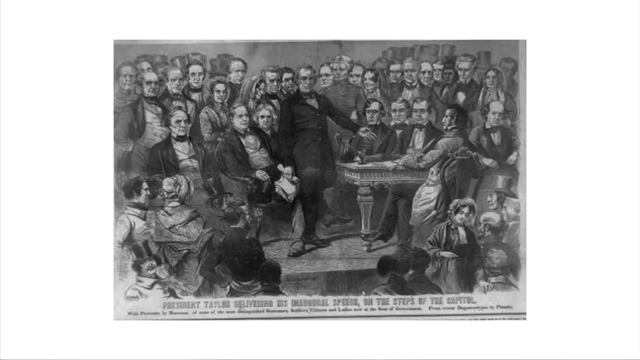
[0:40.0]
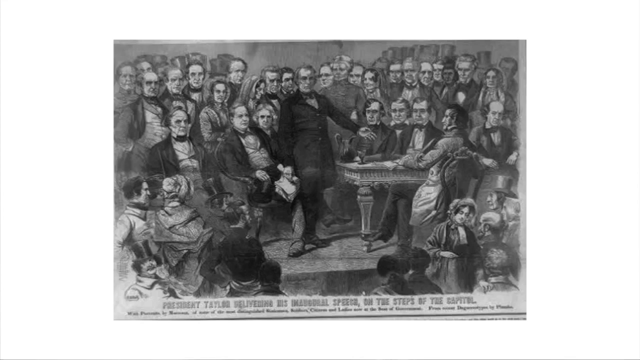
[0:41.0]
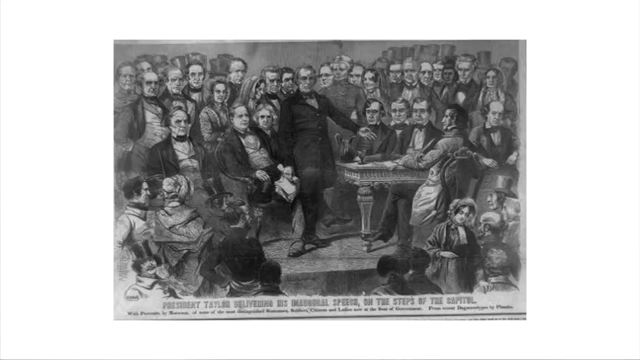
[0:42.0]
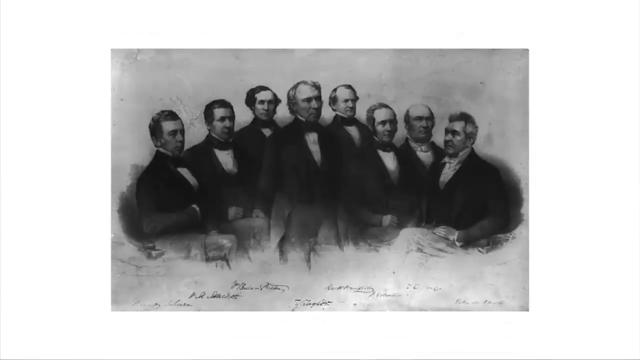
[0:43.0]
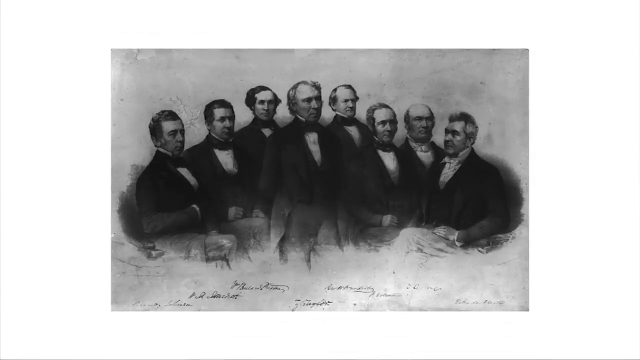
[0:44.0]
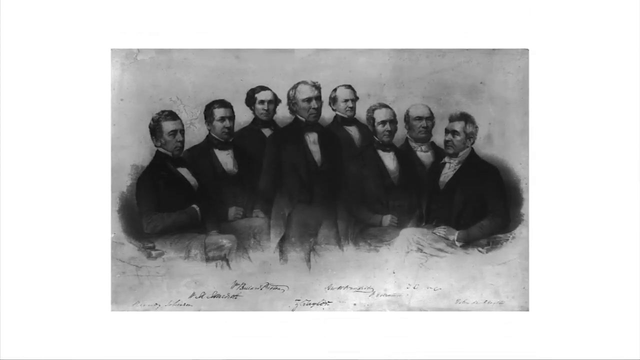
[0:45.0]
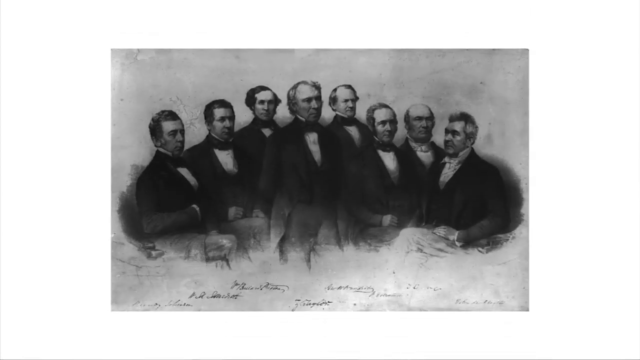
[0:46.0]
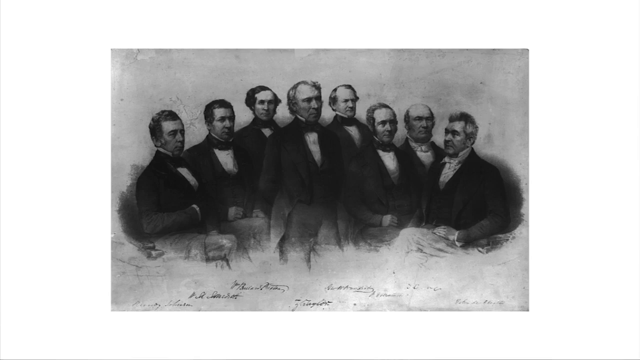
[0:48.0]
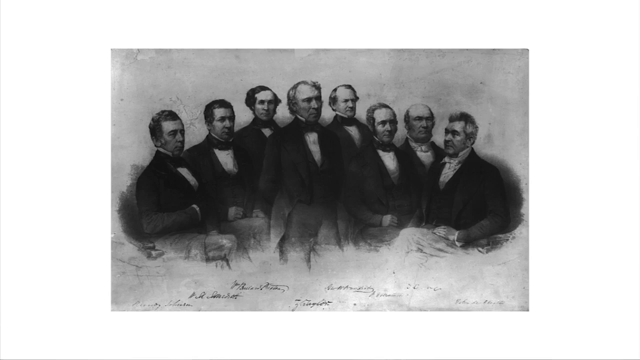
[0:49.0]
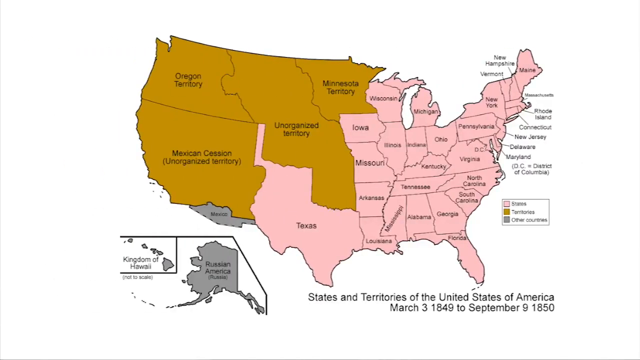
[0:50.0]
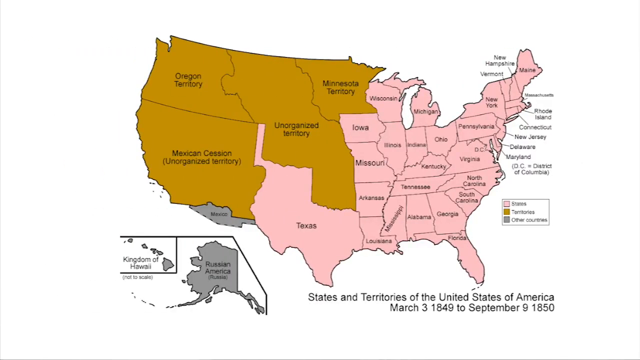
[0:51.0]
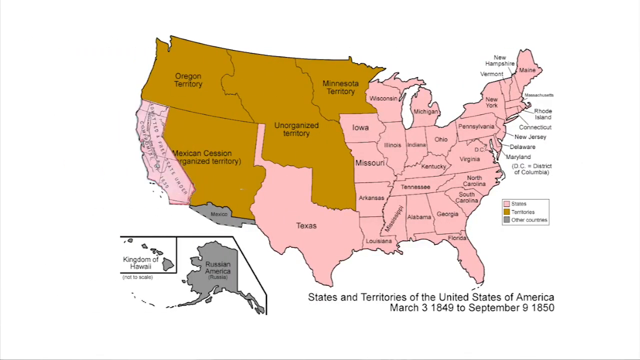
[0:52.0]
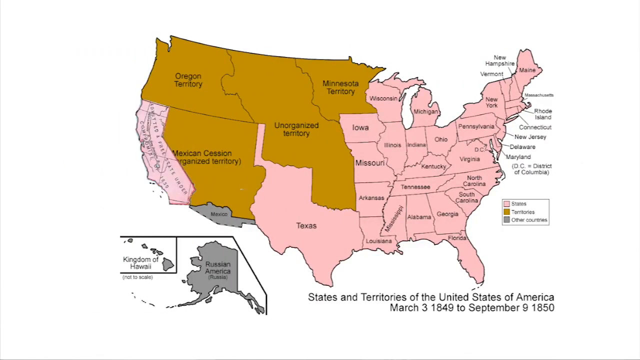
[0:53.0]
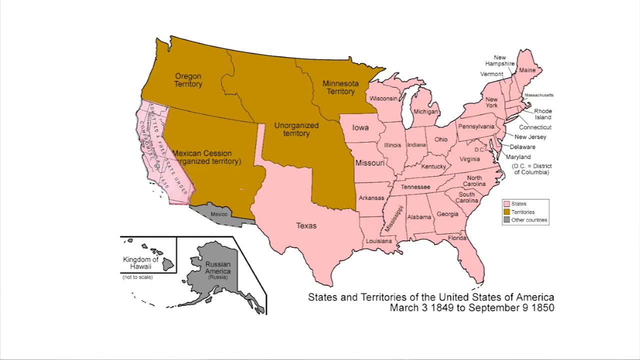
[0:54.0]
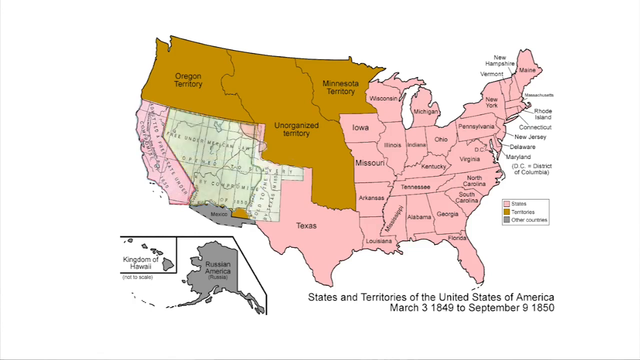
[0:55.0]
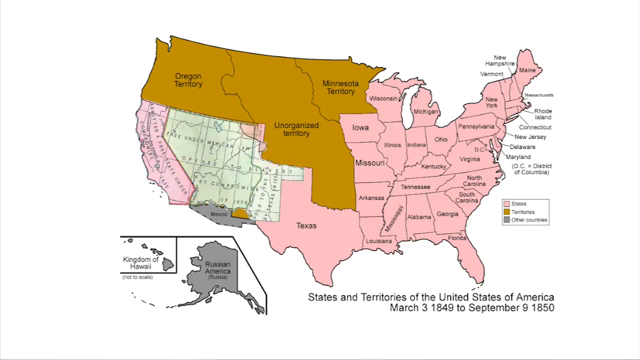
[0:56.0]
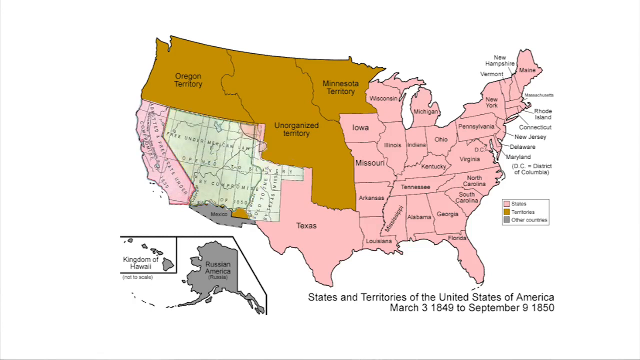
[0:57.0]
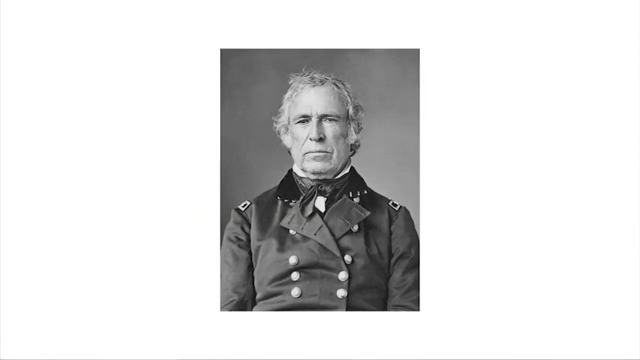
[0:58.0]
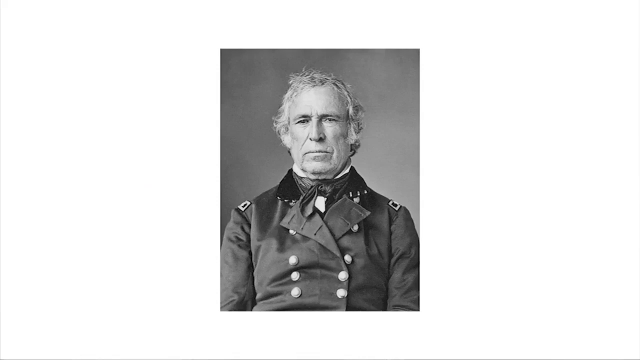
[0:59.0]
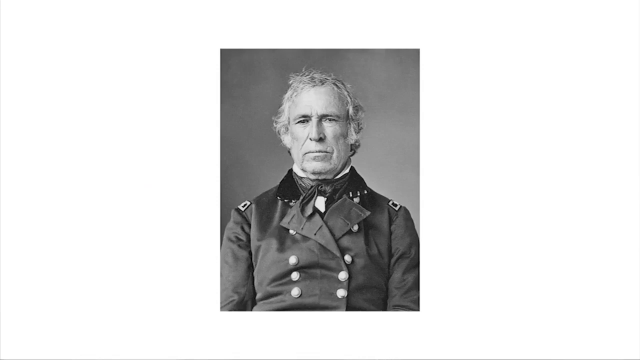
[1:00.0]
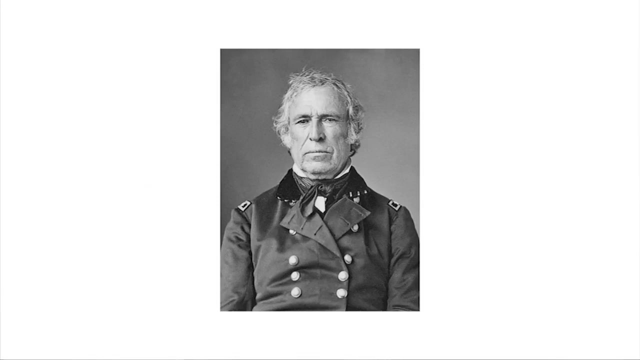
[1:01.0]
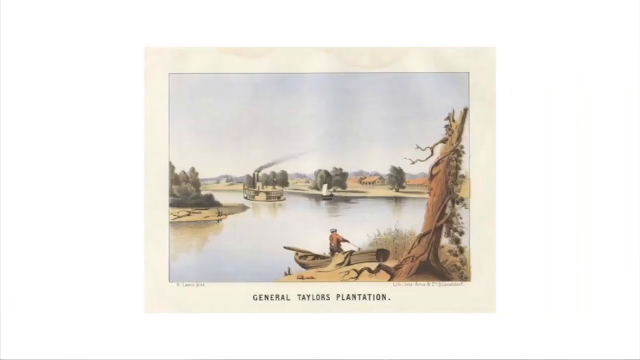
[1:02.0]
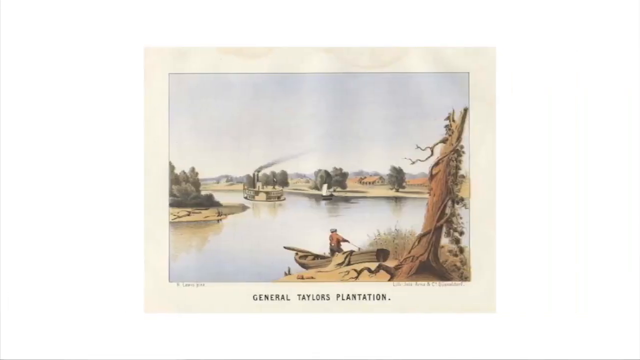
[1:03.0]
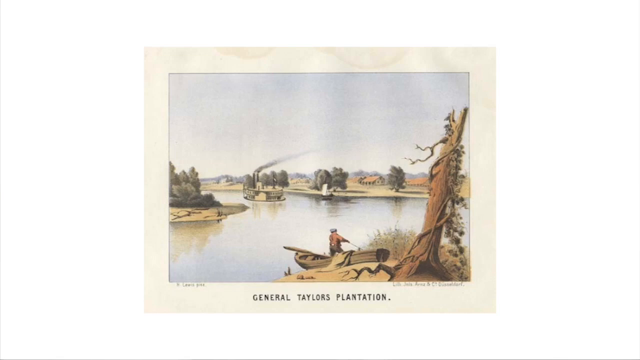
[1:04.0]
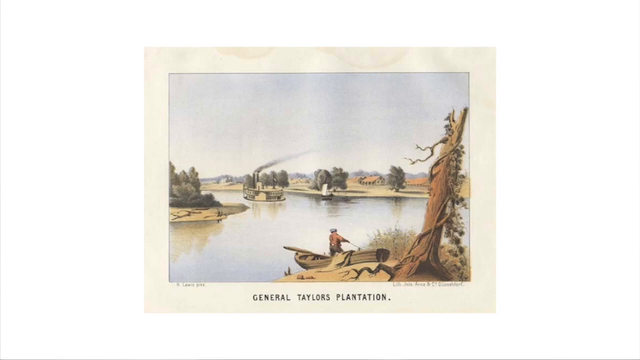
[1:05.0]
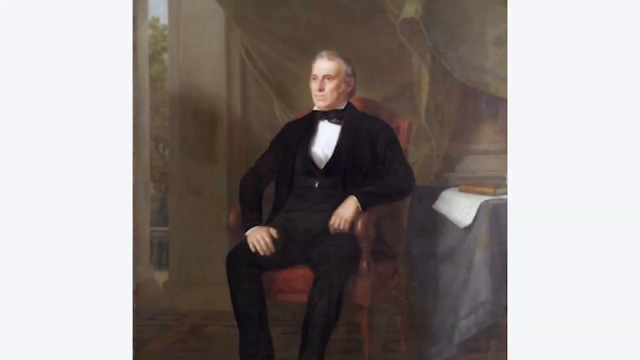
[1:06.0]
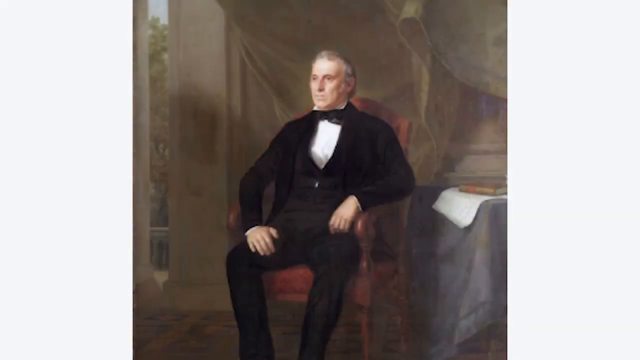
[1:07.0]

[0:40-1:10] A black-and-white image appears that looks like a drawing, possibly a pencil sketch, and also seems to be cut out of a newspaper. It shows a whole bunch of men in suits who look dressed like men from the 1800s. In the middle is a desk, where a man seems to be sitting while everybody else surrounds him. The video cuts to another picture of men also wearing suits with dark ties: about three on the left, one in the middle and four on the right, all kind of posing turned to the right, except the person on the far right, who seems to face the other direction. It then cuts to a map of the United States with the left side in brown and the right side in pink; Texas is in pink, and then California turns pink. Underneath California a last bit of gray is visible.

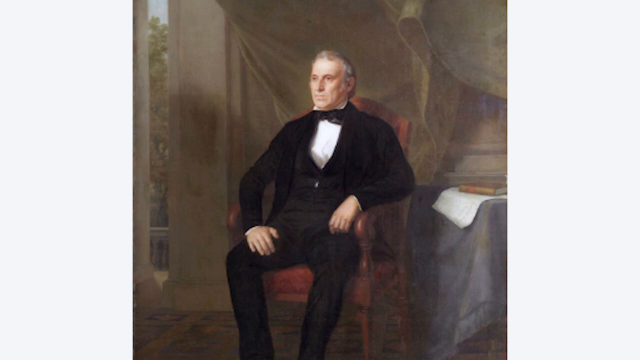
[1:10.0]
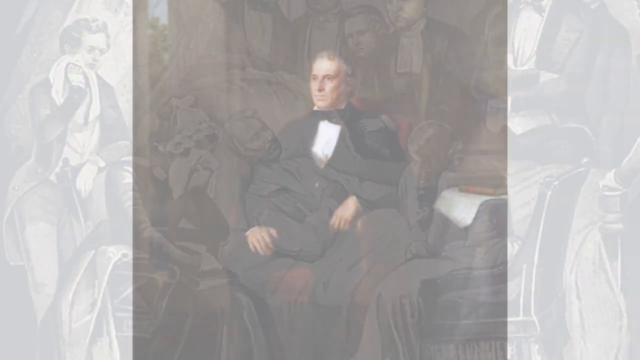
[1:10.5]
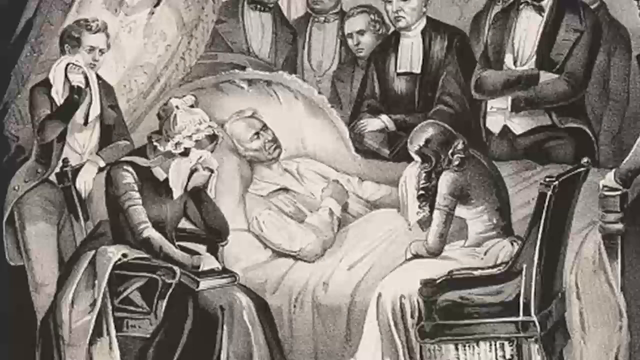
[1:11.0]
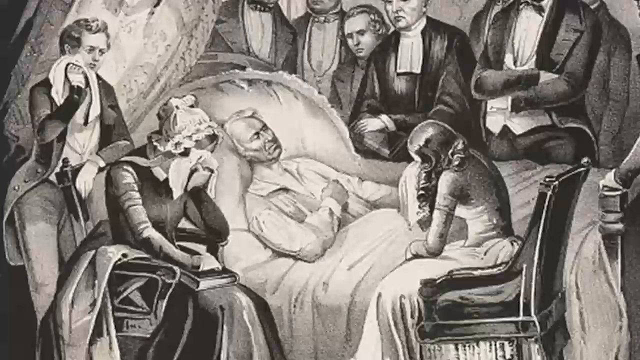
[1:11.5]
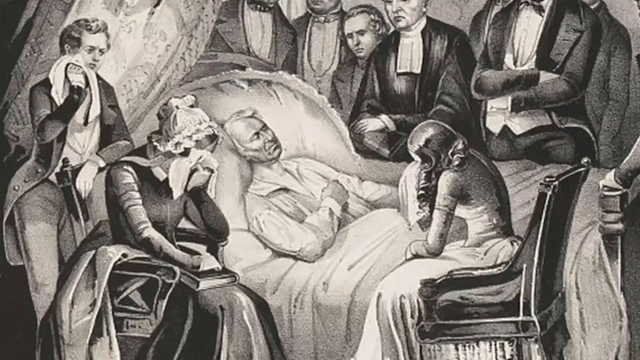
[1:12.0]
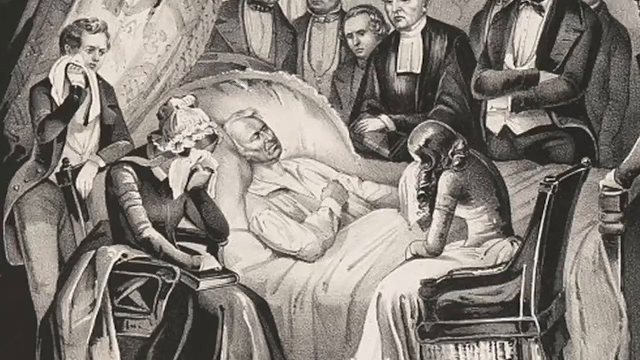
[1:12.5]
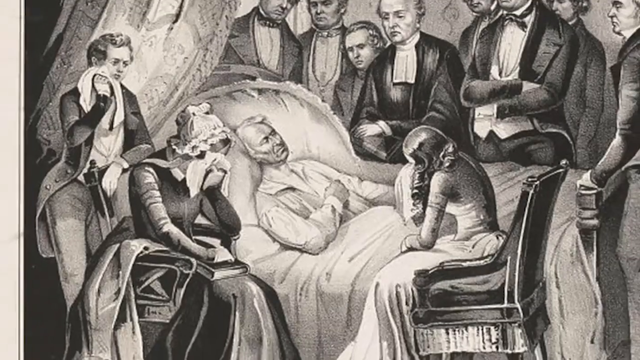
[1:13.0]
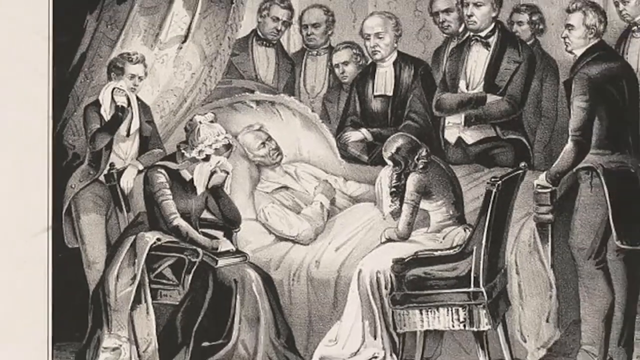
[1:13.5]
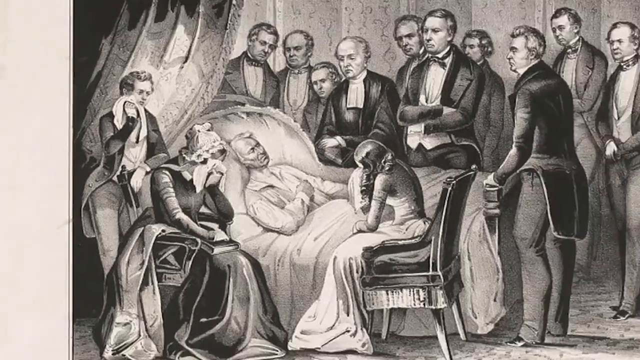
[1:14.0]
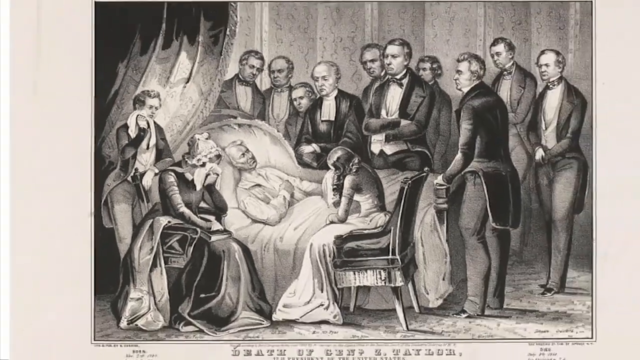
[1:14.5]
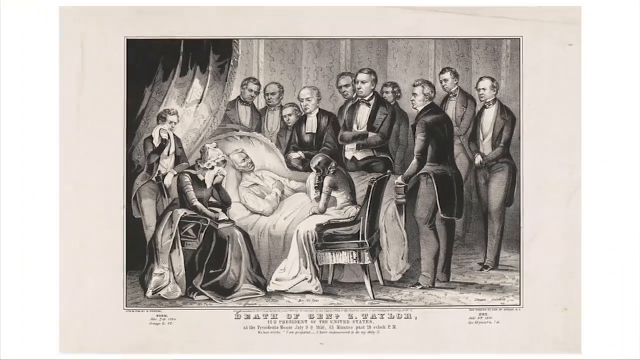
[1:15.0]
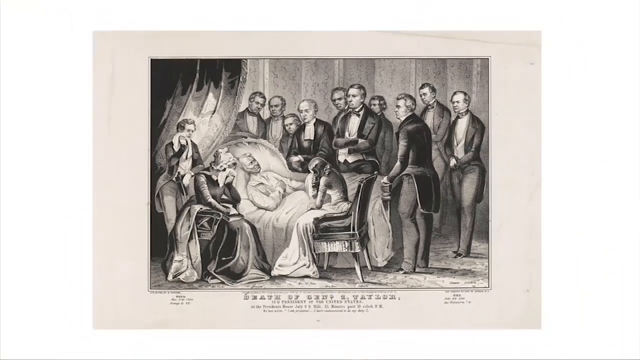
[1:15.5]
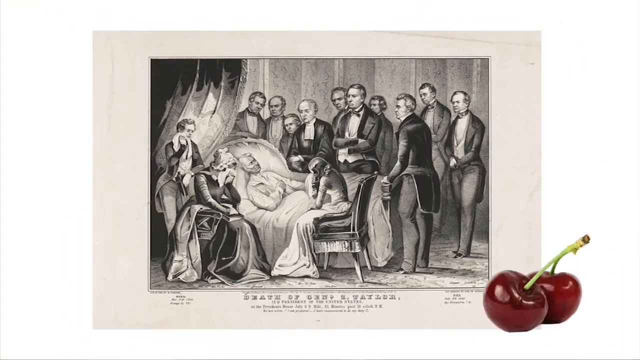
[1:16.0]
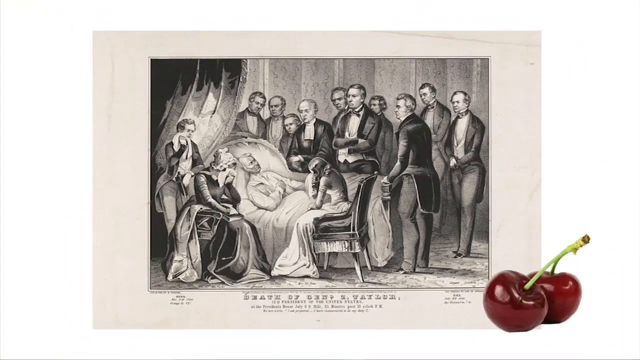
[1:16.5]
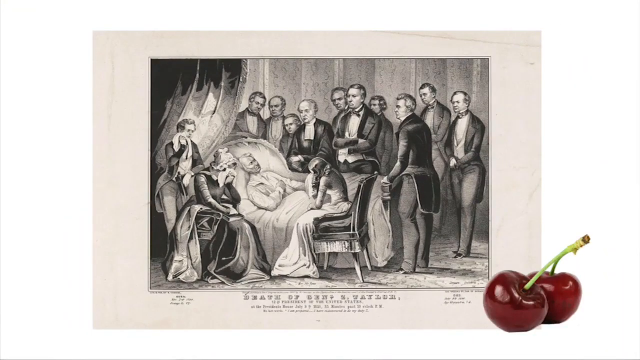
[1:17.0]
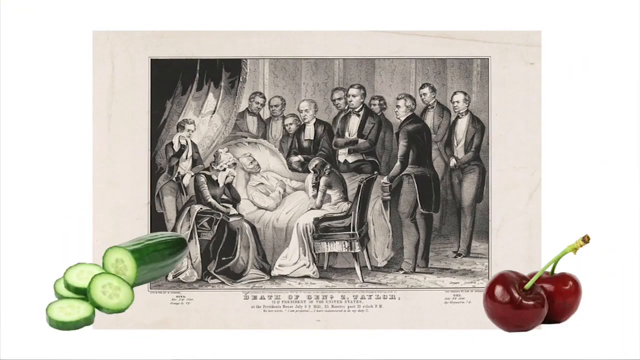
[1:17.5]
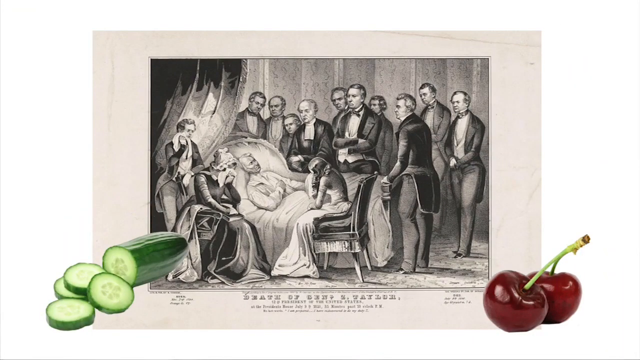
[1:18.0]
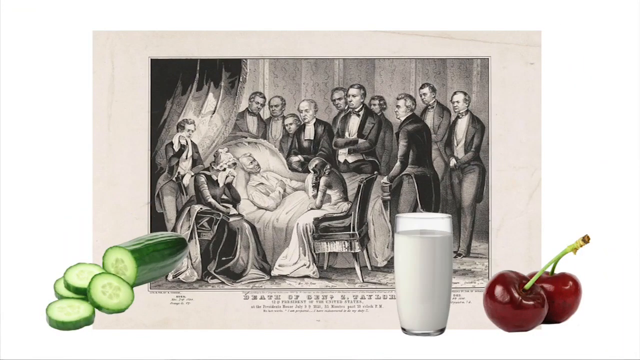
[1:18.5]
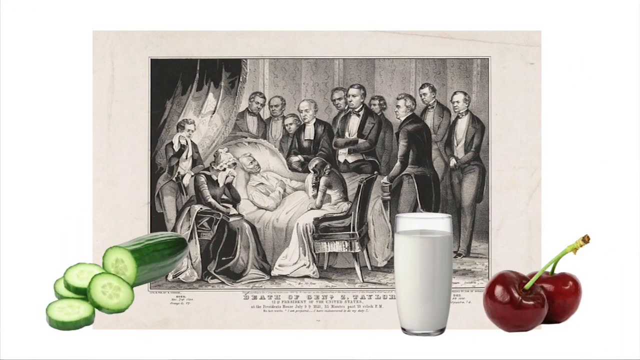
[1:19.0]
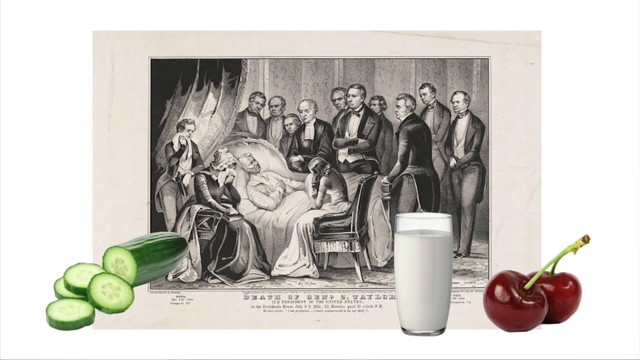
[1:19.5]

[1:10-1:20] What looks like a portrait shows a man sitting on a red chair, wearing a black tuxedo with a white shirt and a black bow tie. He has gray hair. His right hand is on his lap, his left hand seems to lean on the arm of the chair, and he seems to be looking toward his right. On his right there is an opening in the building through which trees outside are visible. The video cuts to another black-and-white picture that also looks drawn, possibly in pencil. A person wearing white lies in a bed and looks either dead or sick. Two women sit in chairs beside his bed in the front, crying and covering their faces with what look like towels or napkins. Behind him in the background a whole bunch of men stare at him. The camera pans out to a zoomed-out image of the man in the bed, and two real cherries with green stems appear in the lower right corner of the screen.